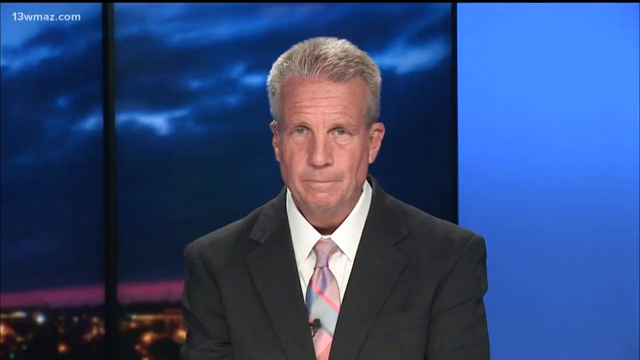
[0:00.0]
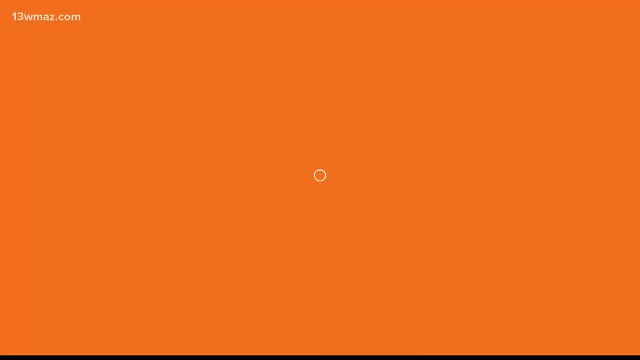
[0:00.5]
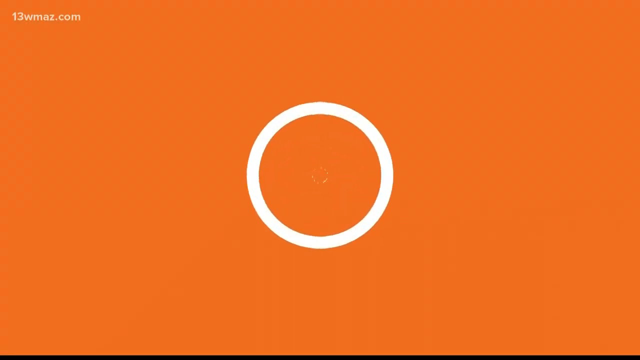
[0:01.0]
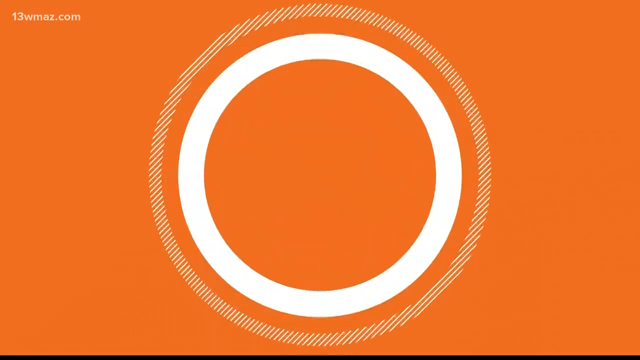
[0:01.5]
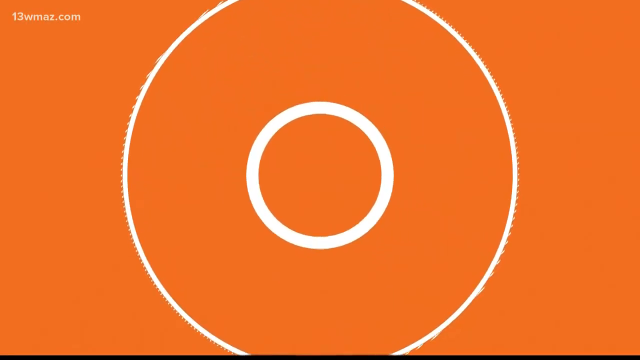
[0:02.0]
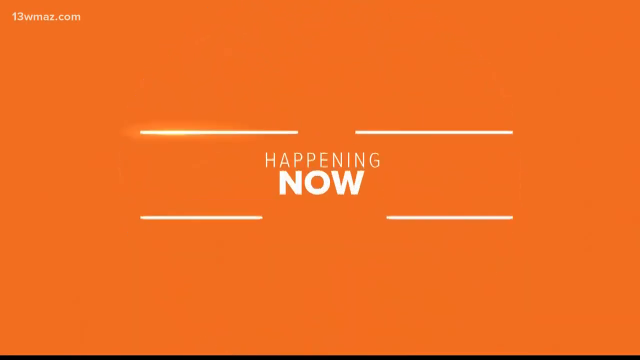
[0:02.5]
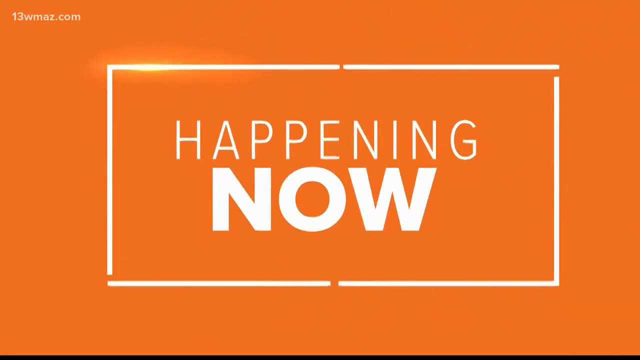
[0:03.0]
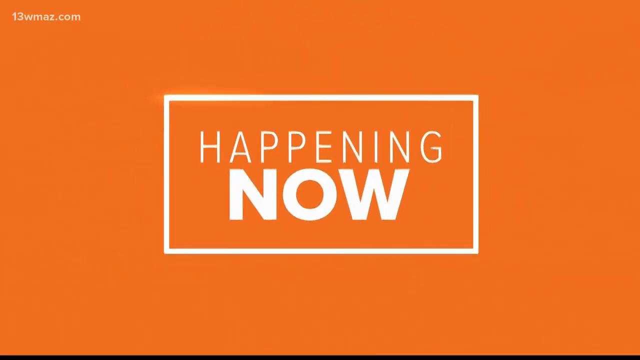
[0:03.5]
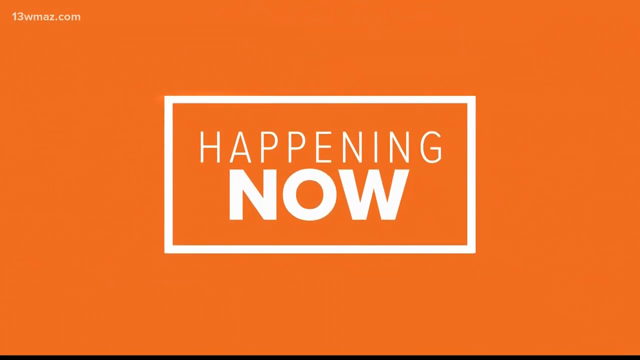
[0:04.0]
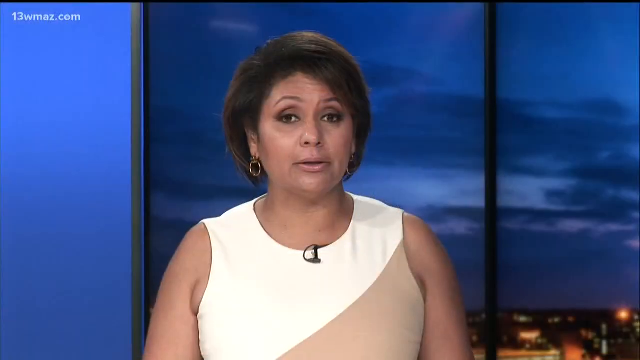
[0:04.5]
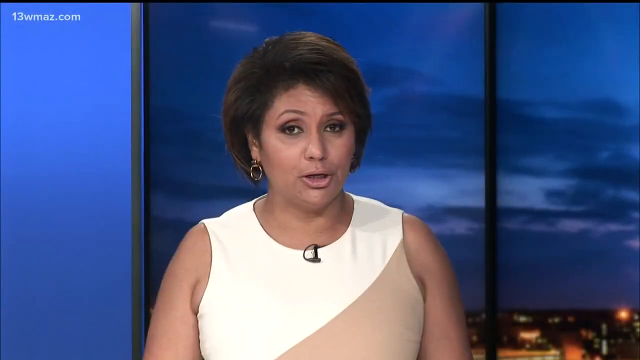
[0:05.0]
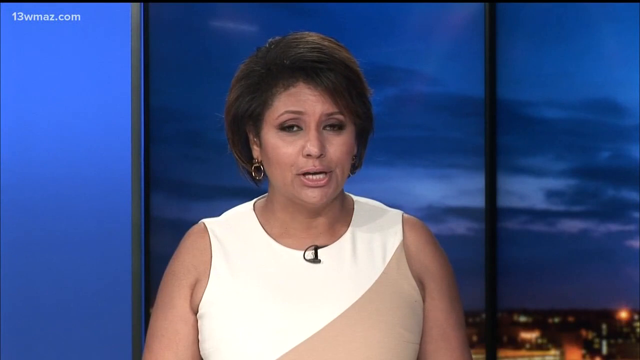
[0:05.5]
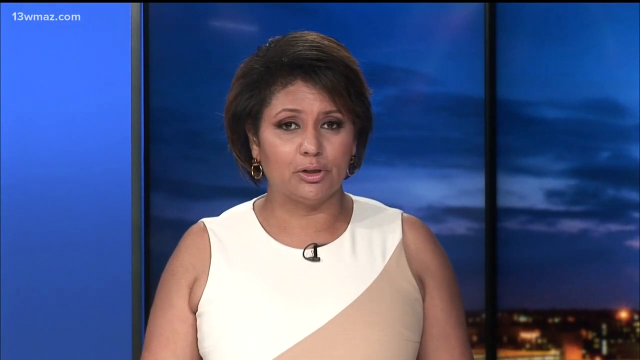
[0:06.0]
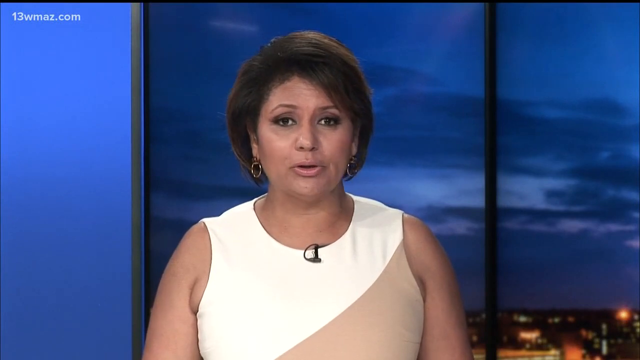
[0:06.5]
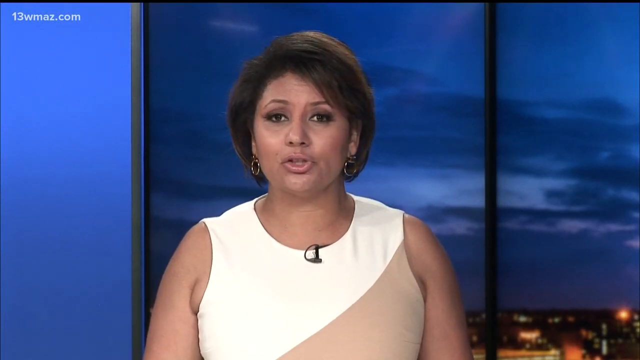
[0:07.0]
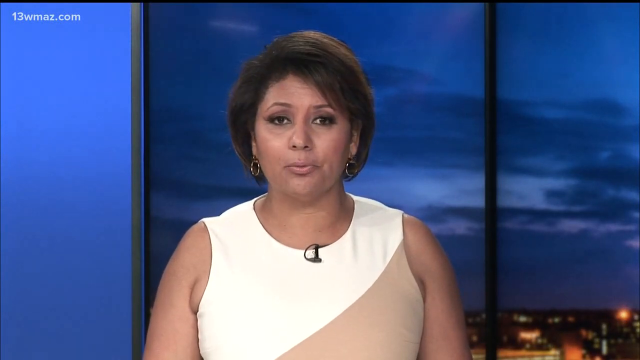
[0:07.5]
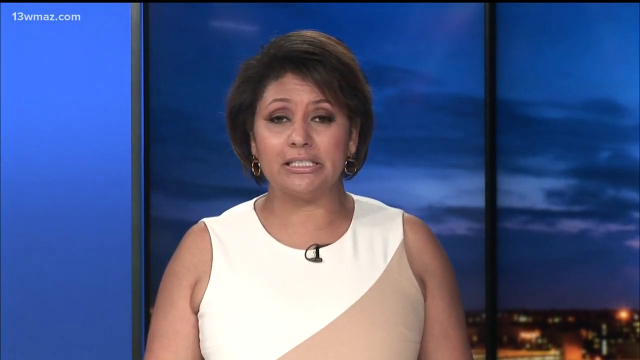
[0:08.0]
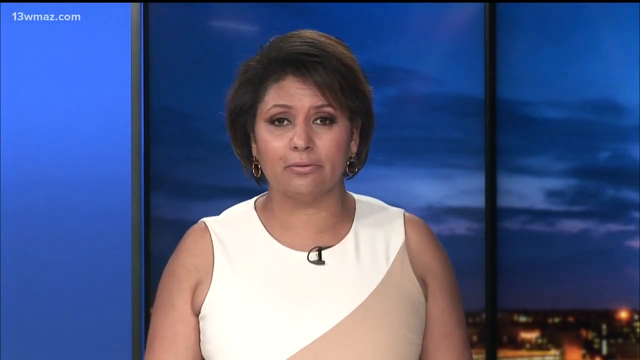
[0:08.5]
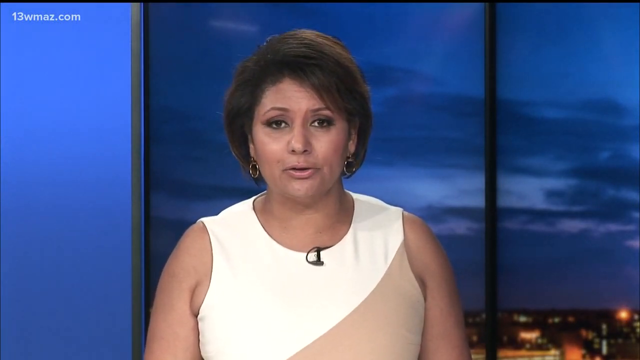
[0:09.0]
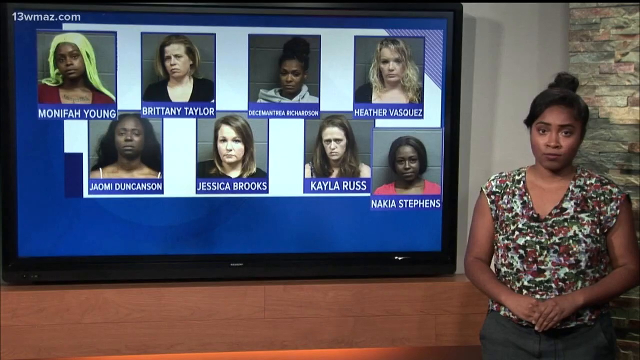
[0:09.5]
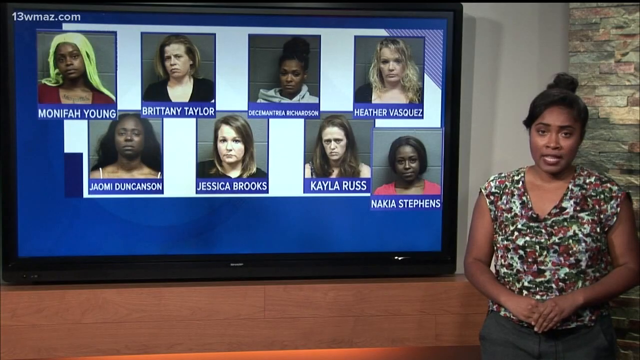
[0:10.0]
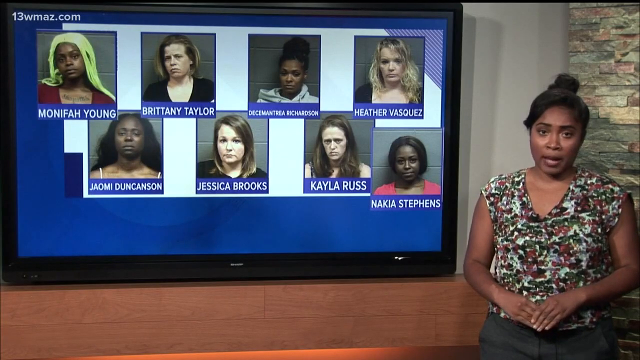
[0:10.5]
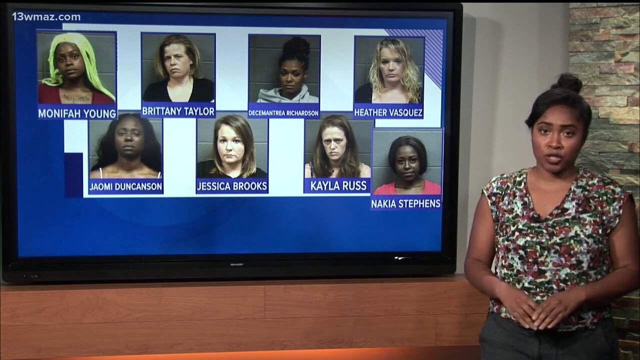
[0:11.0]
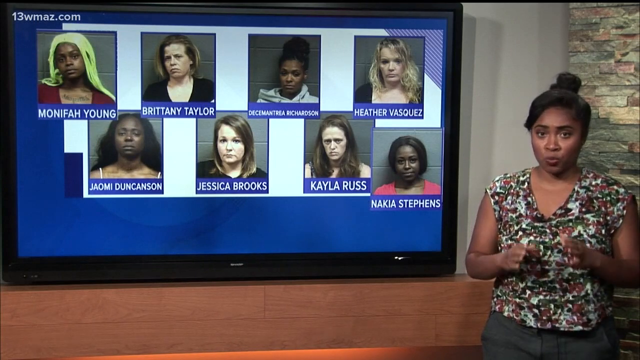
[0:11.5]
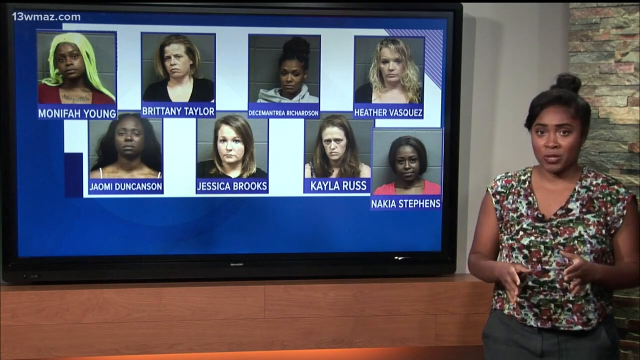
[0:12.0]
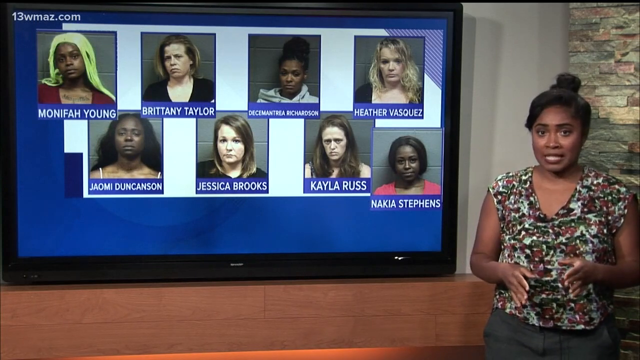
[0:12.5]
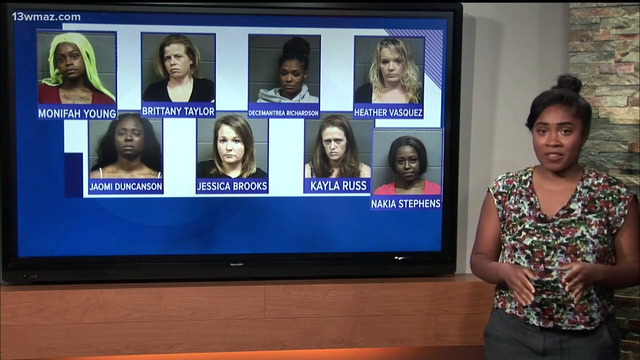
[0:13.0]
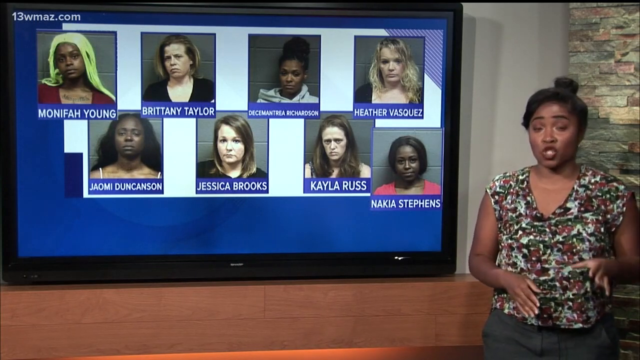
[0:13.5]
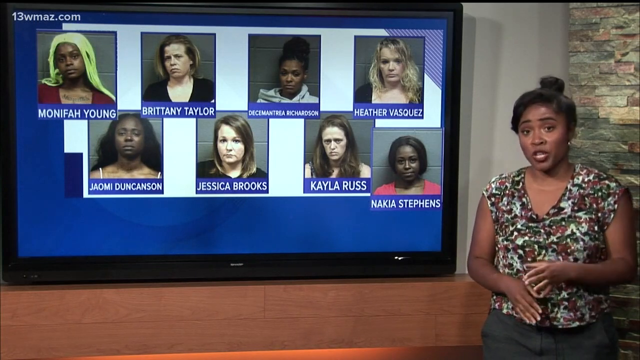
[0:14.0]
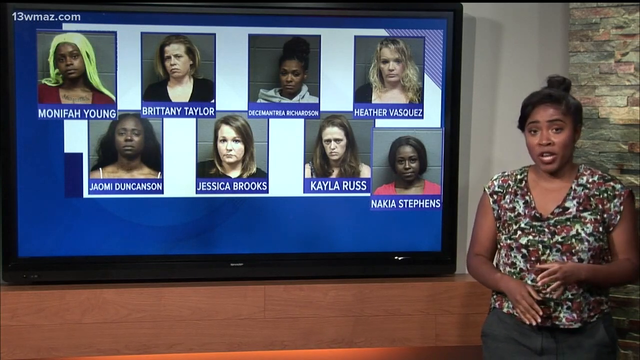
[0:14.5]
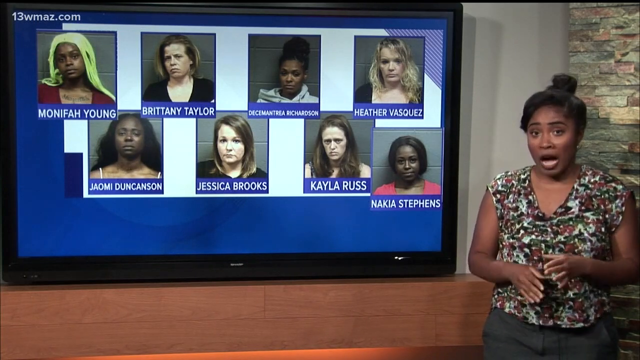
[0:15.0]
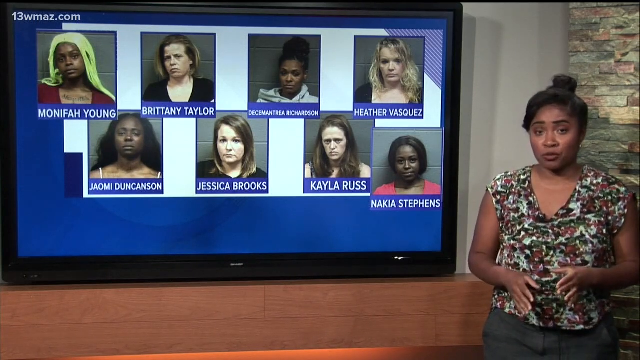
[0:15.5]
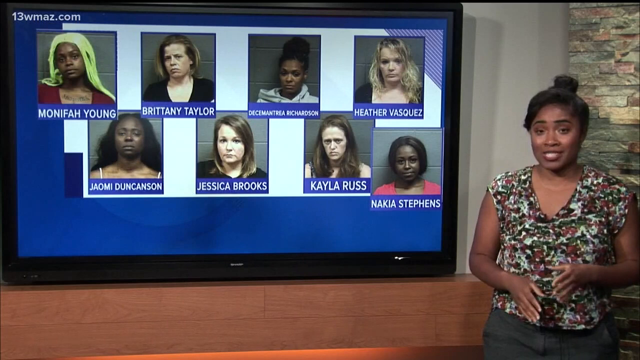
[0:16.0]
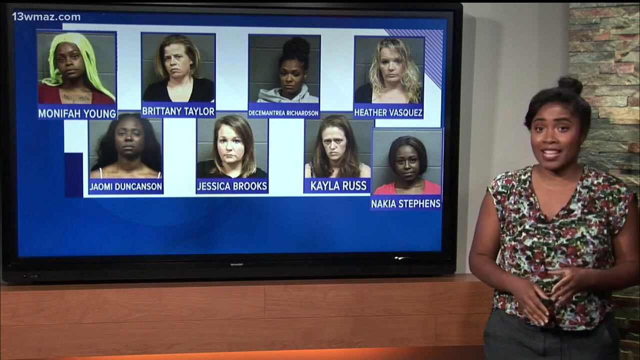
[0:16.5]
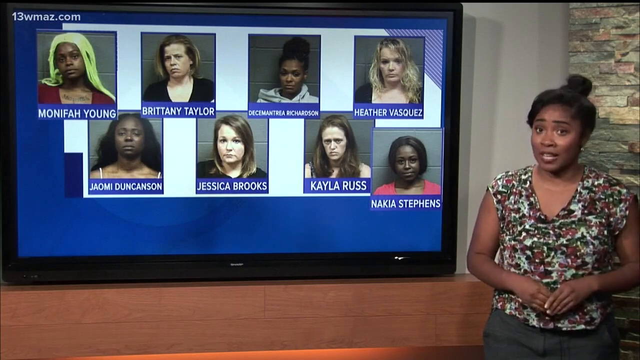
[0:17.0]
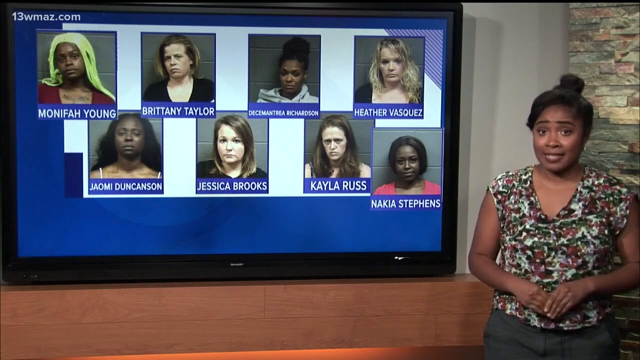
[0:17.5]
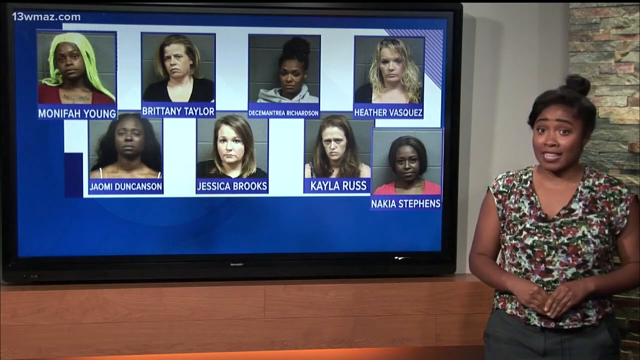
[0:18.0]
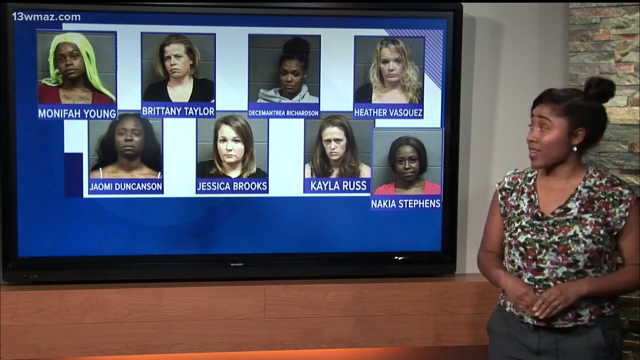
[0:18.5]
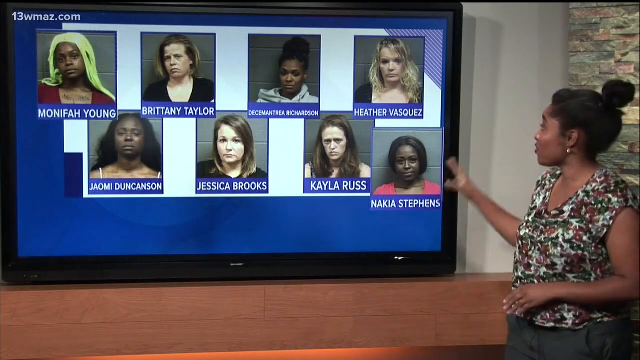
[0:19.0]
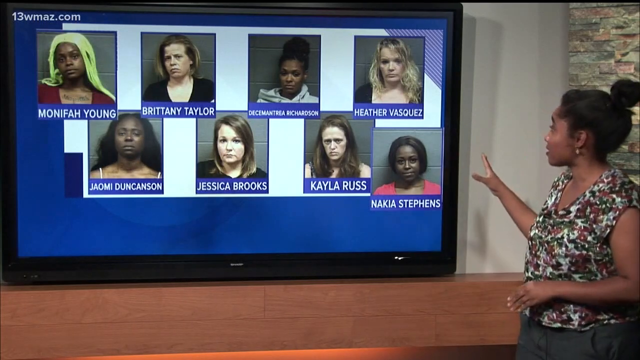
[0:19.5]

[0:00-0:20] An orange background appears at the front, and the words "happening now" are written in white and put in a box. A woman wearing a brown and white dress speaks while looking right through the camera; behind where she is sitting is a blue background with something that looks like a sky. A screen then appears showing captions of different women, along with a woman on the right side who is talking while facing the camera and wearing a floral dress. This caption looks like something that has been on a TV screen, and its background is blue. Behind where the woman is standing is a brick wall, and where the TV is there is a white wall. Next, a man faces the camera wearing a suit, a white shirt and a striped tie, with a blue background behind him.